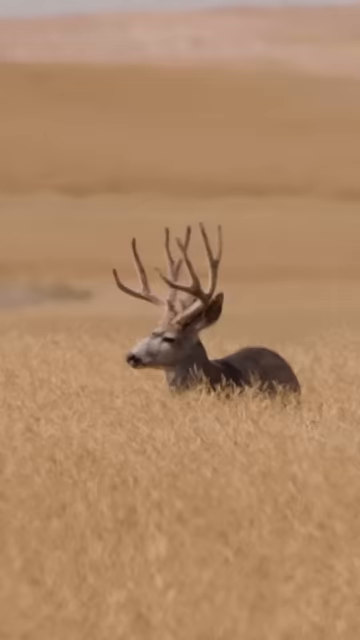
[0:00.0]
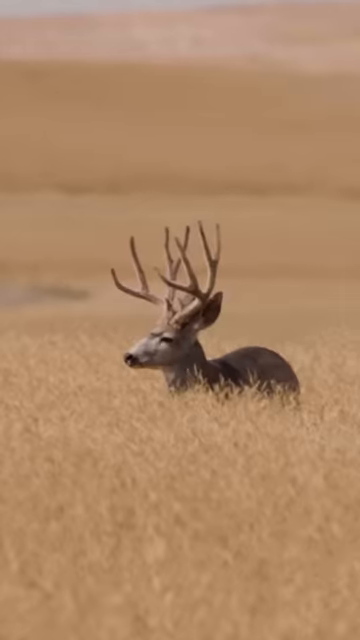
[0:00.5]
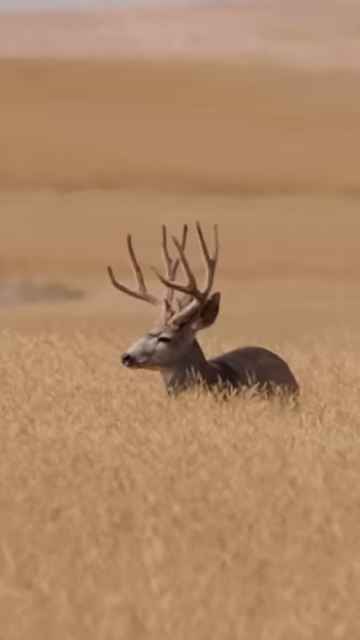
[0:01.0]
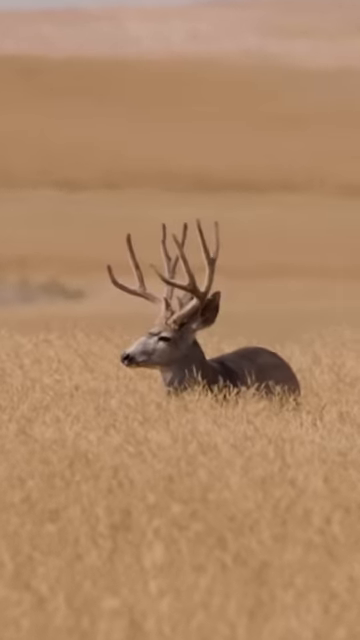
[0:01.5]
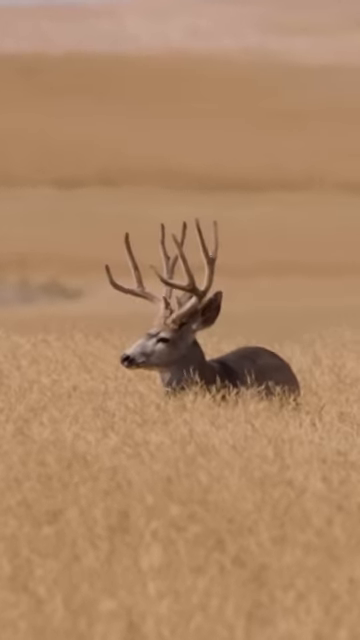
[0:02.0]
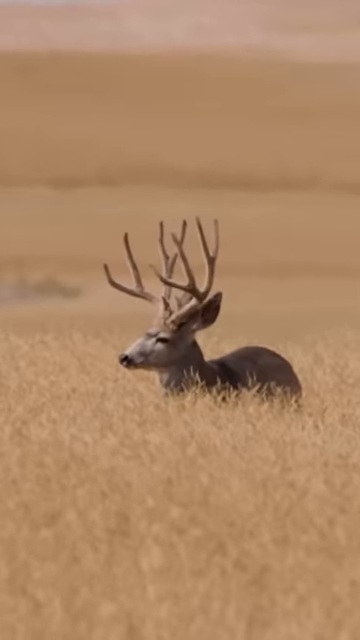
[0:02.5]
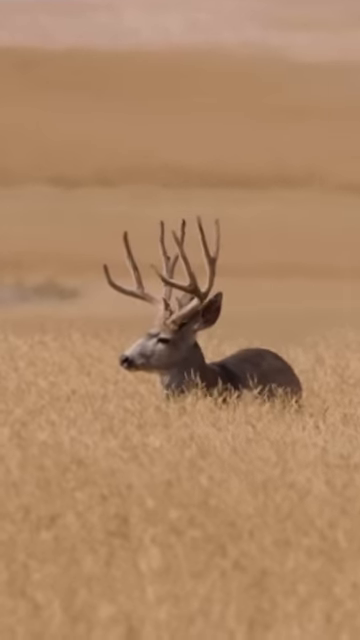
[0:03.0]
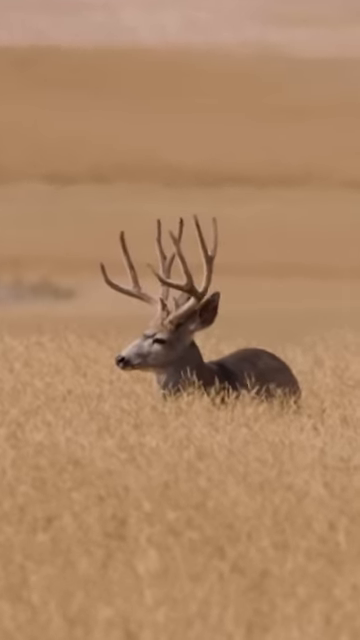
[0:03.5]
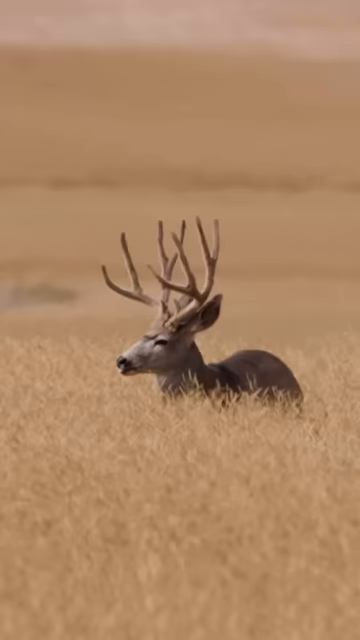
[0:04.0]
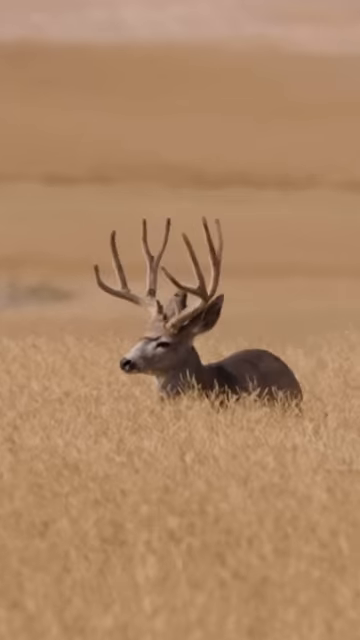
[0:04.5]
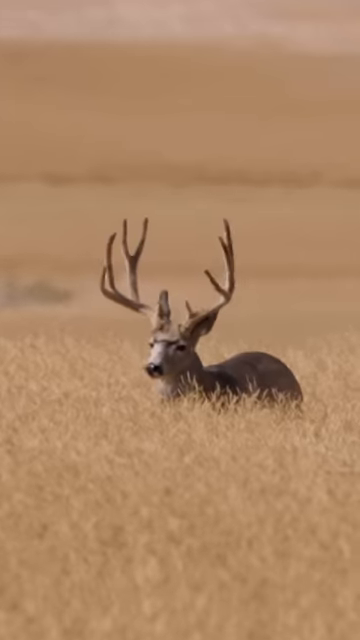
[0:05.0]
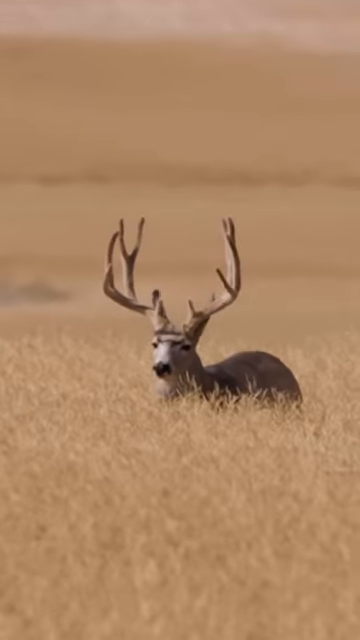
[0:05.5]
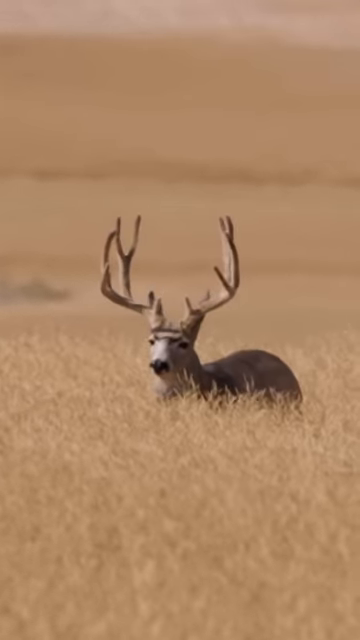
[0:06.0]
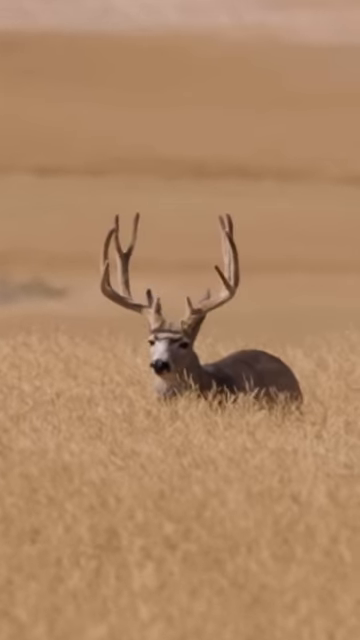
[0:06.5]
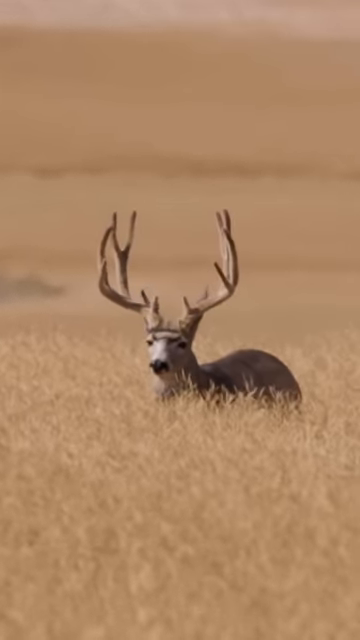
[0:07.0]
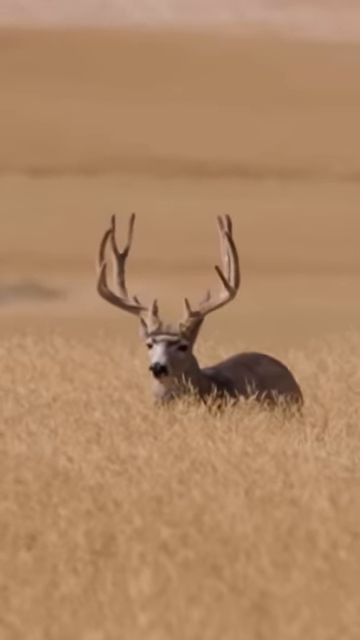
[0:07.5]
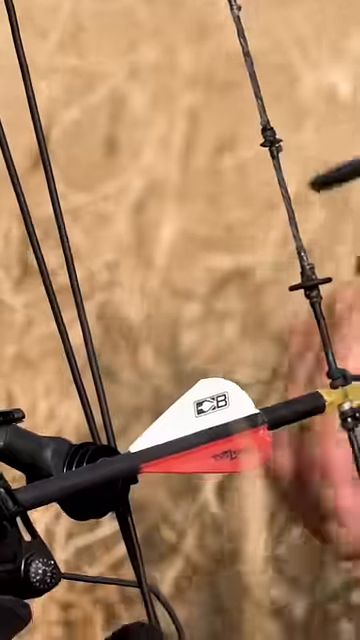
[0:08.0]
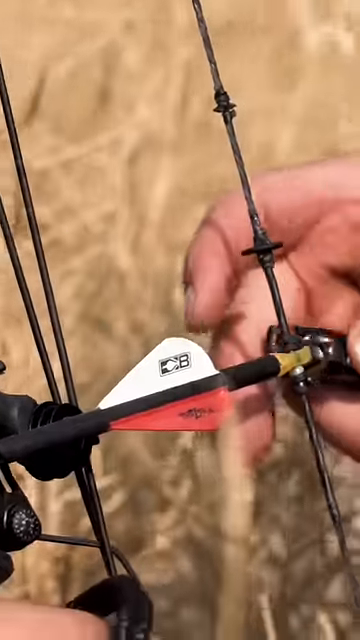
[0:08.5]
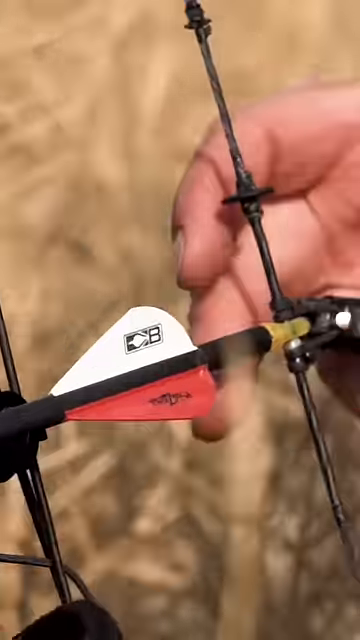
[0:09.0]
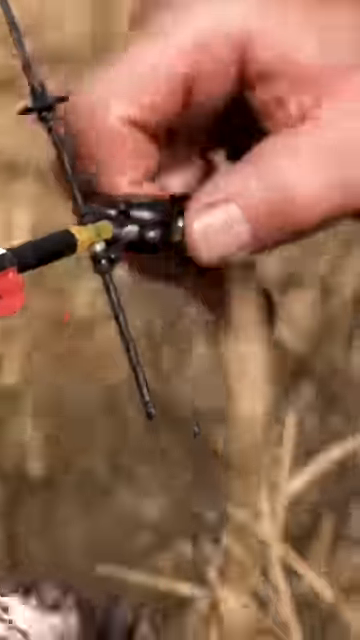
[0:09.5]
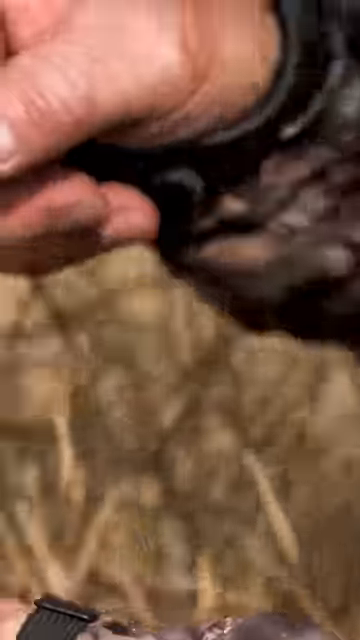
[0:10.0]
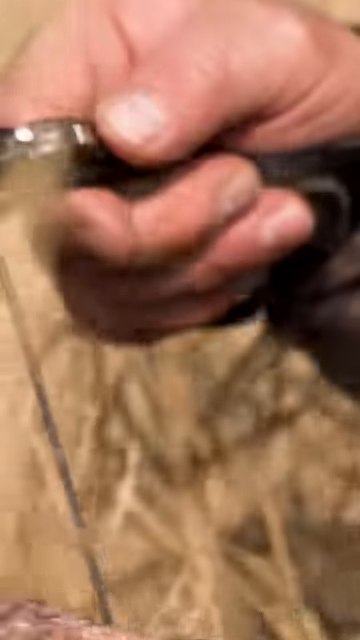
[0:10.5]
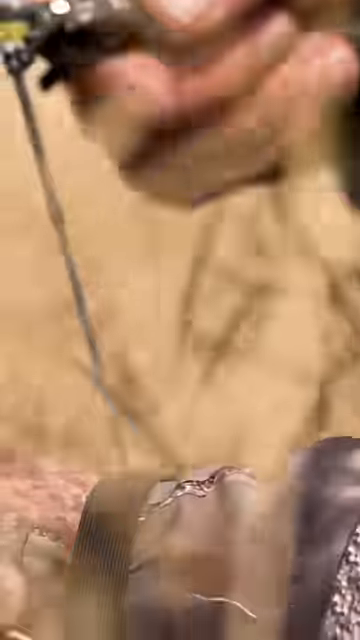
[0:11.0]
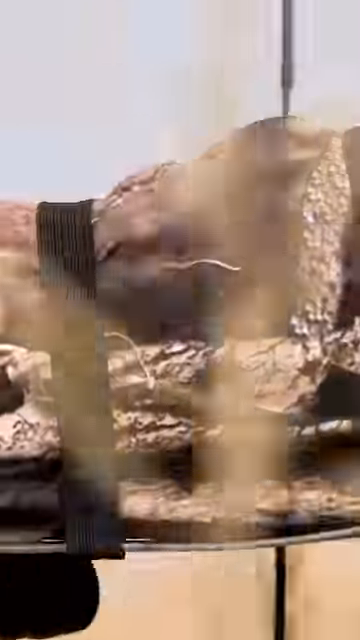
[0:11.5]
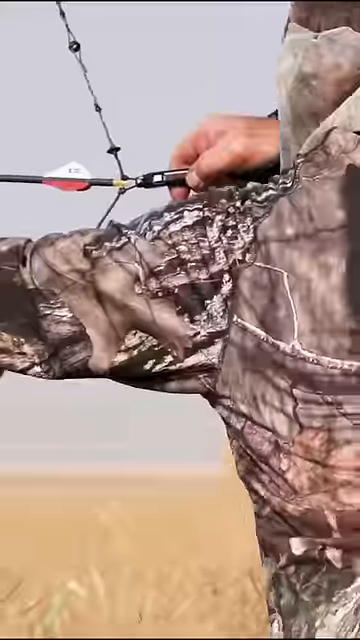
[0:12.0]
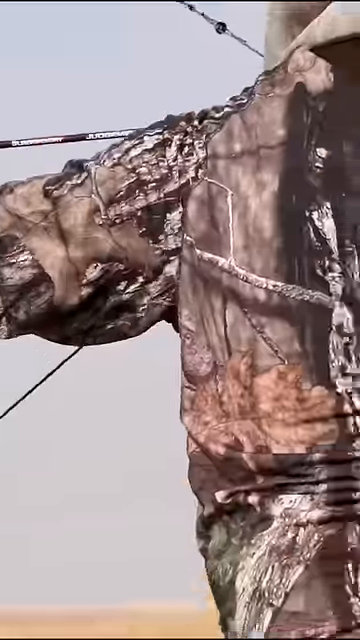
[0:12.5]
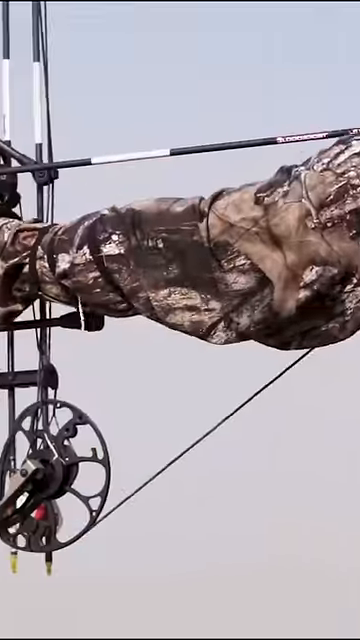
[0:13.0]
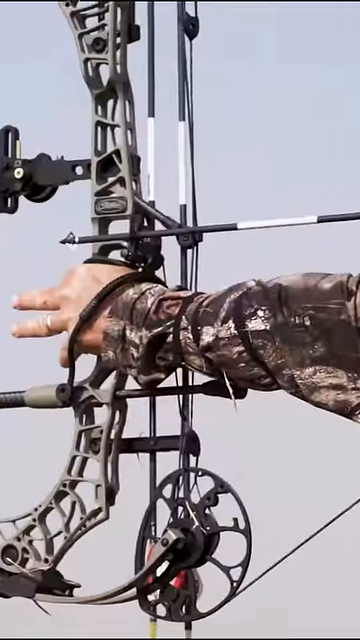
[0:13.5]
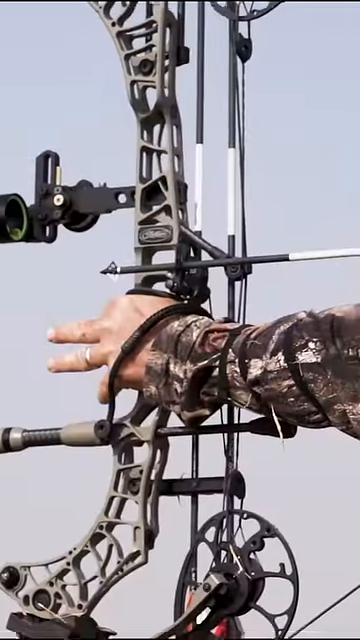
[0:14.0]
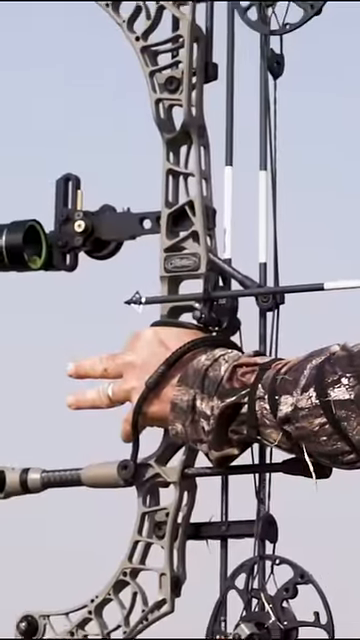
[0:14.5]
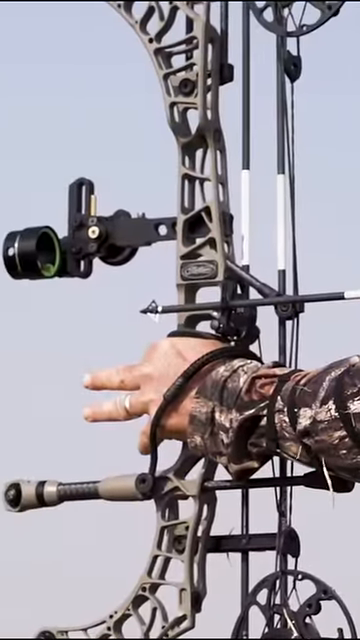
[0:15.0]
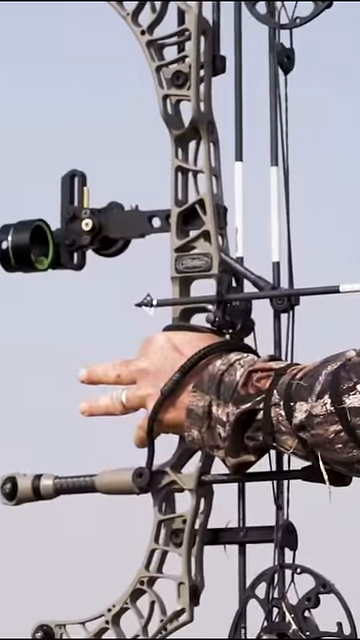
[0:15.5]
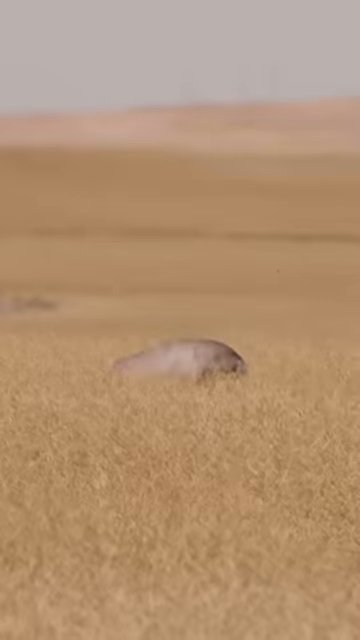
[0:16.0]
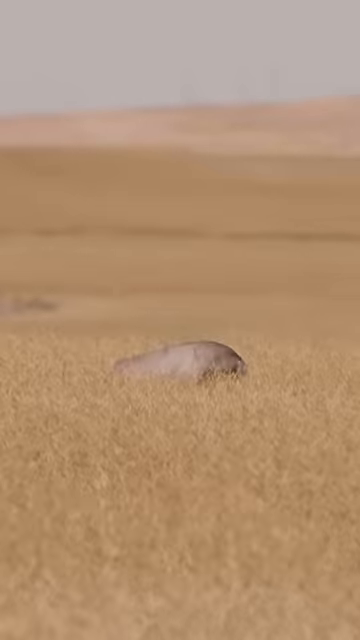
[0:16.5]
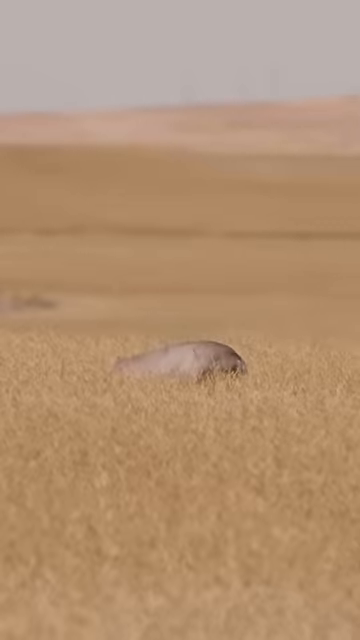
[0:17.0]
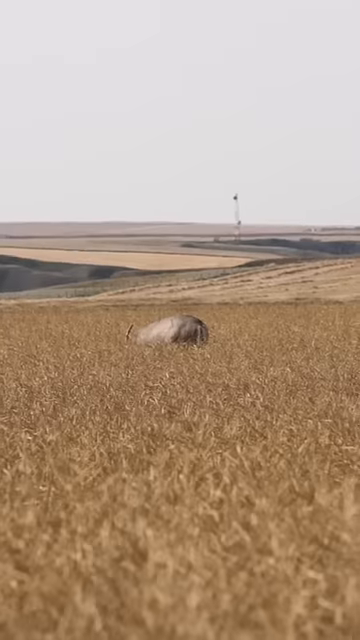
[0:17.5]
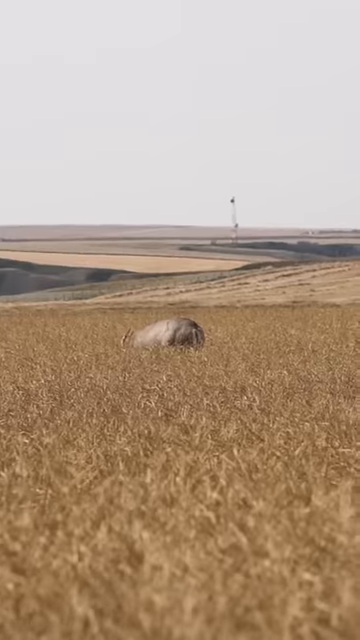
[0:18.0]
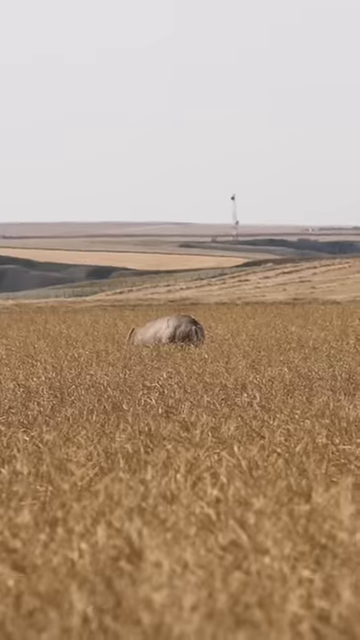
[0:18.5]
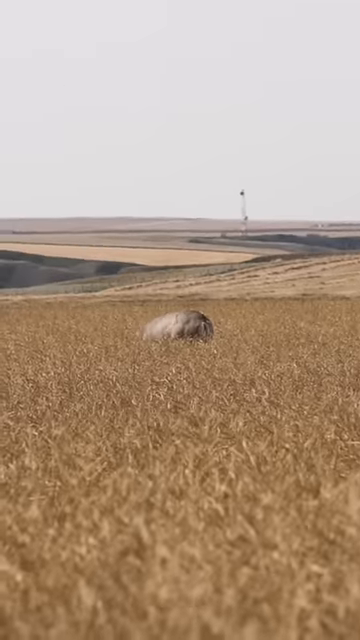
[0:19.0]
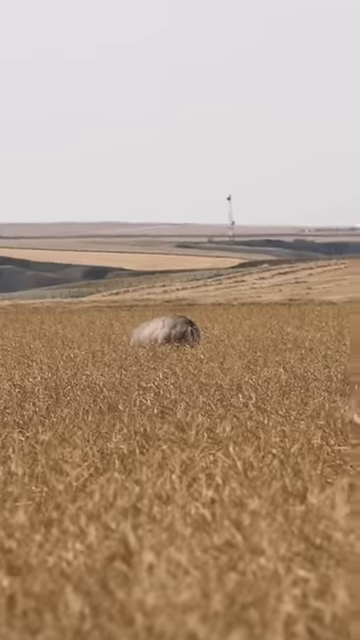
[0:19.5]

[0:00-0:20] The video, titled Spot and Stalk Mule Deer with a Bow, shows a beautiful deer, a buck with antlers, grazing in a field and minding its own business. Next, a hunter with a very sophisticated bow and arrow pulls back on the arrow and lets it go. The hunter himself is not seen, only a sleeve of his green, tan and brown camouflage jacket. The arrow is very long, and it goes up in the air; the deer is not shown actually being hit. There are no other animals in the field, just this very big buck.